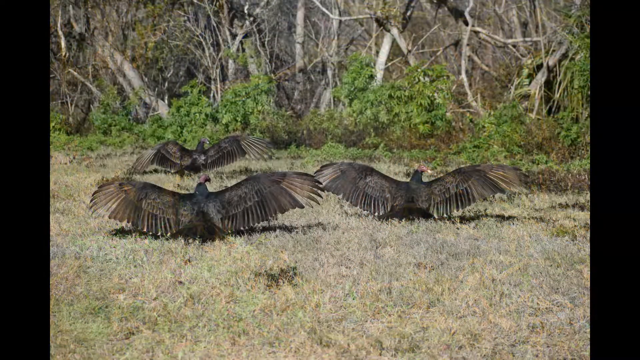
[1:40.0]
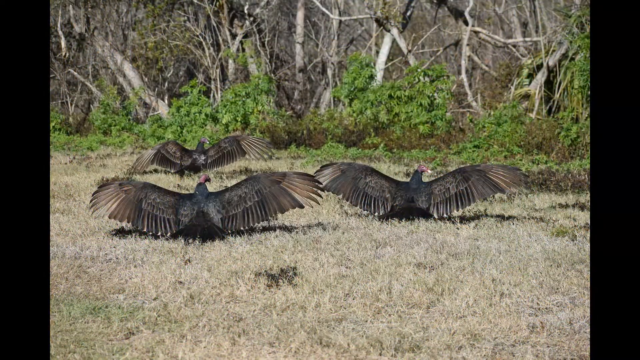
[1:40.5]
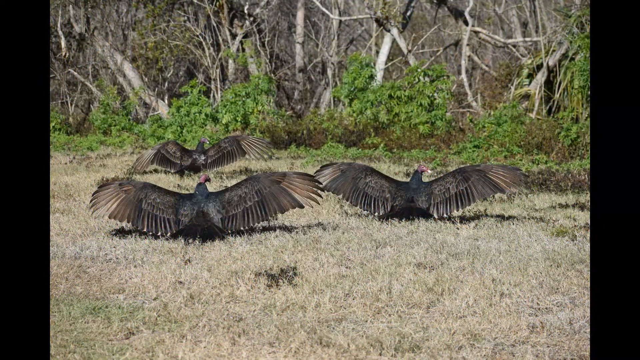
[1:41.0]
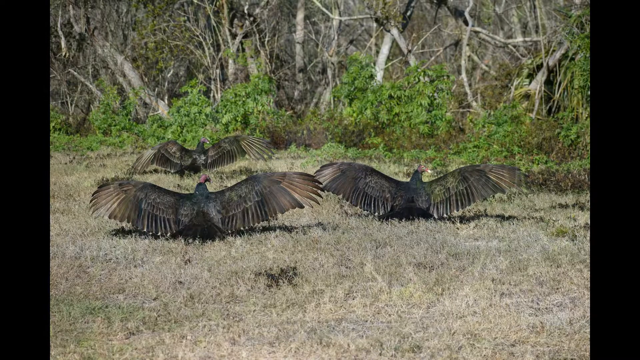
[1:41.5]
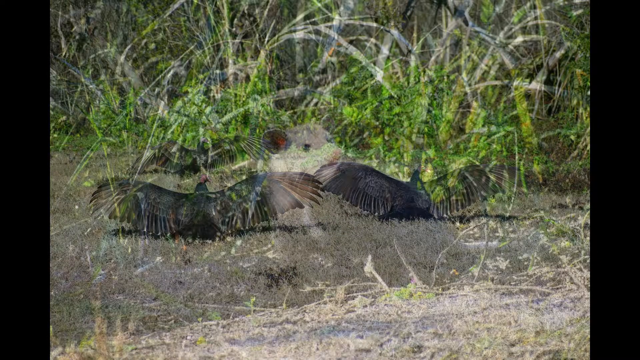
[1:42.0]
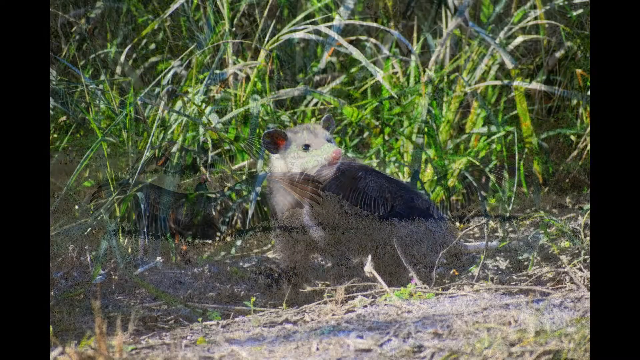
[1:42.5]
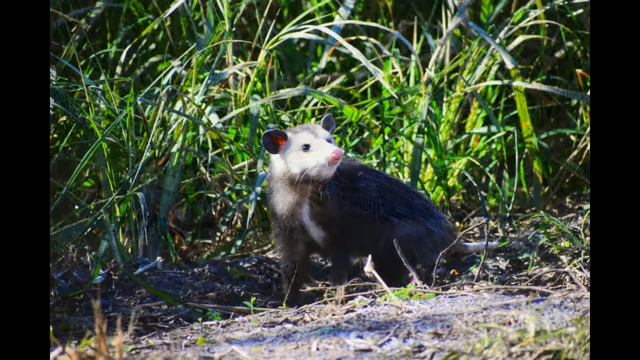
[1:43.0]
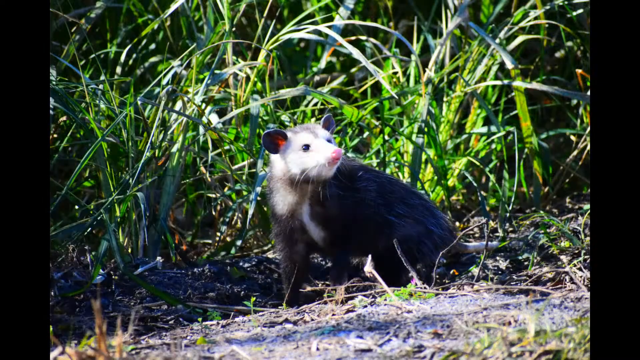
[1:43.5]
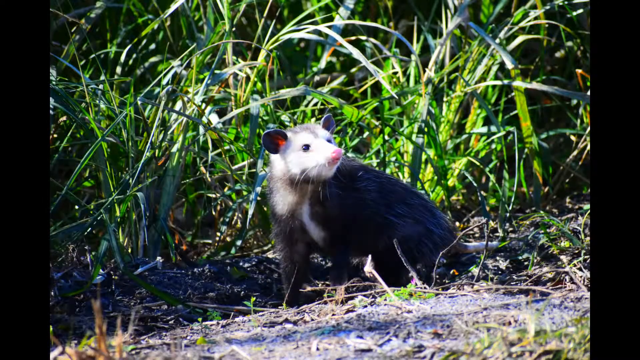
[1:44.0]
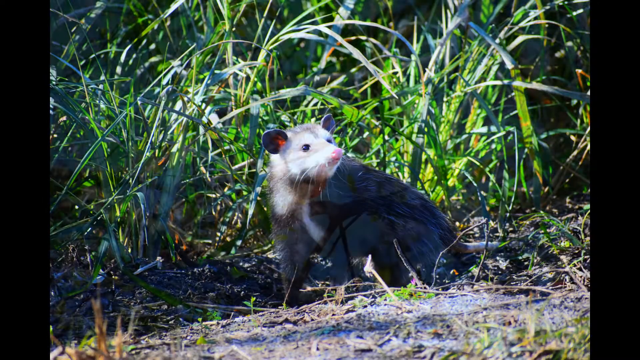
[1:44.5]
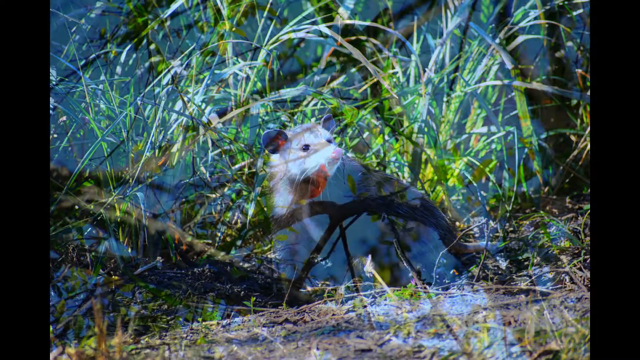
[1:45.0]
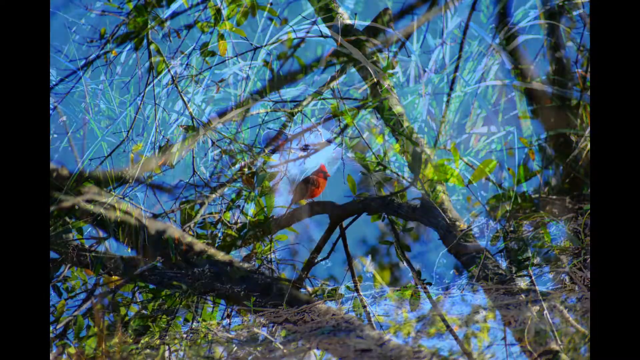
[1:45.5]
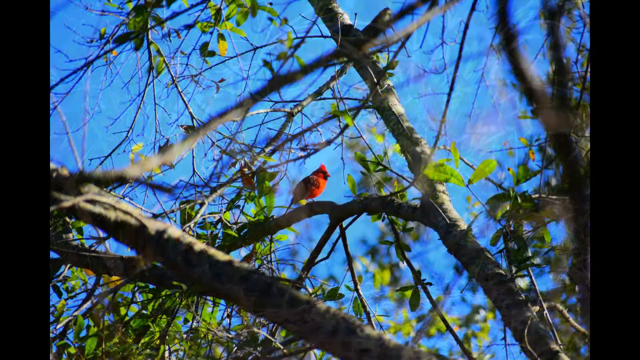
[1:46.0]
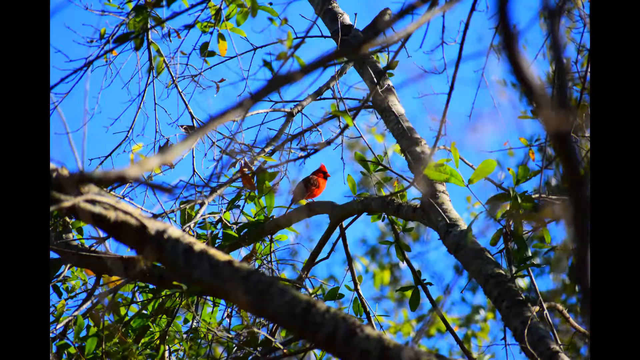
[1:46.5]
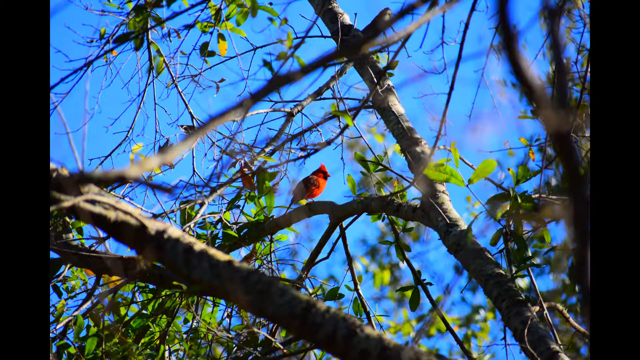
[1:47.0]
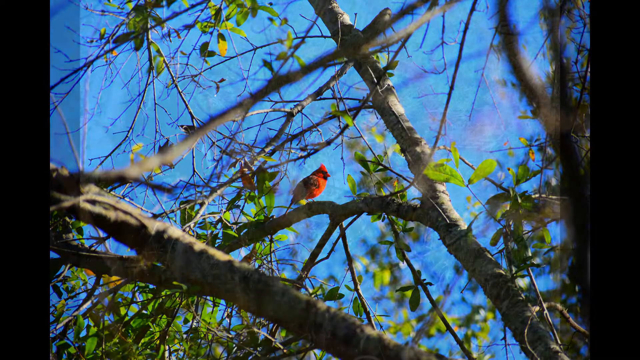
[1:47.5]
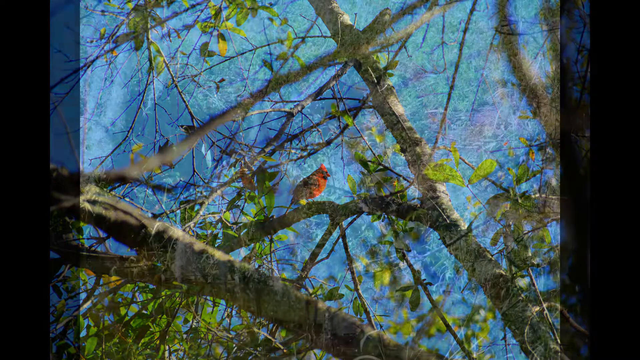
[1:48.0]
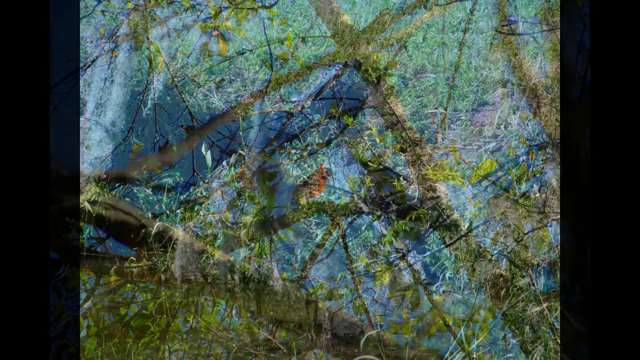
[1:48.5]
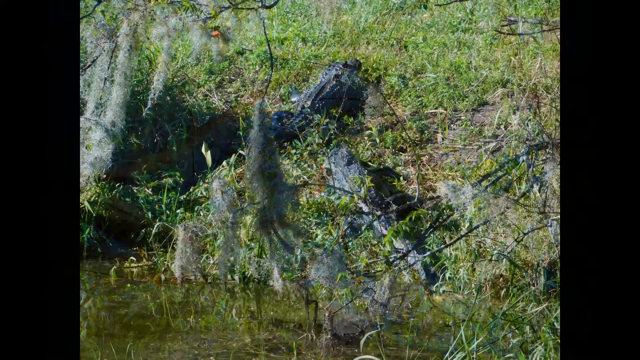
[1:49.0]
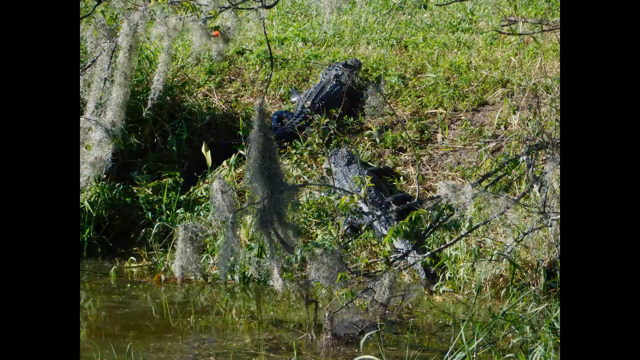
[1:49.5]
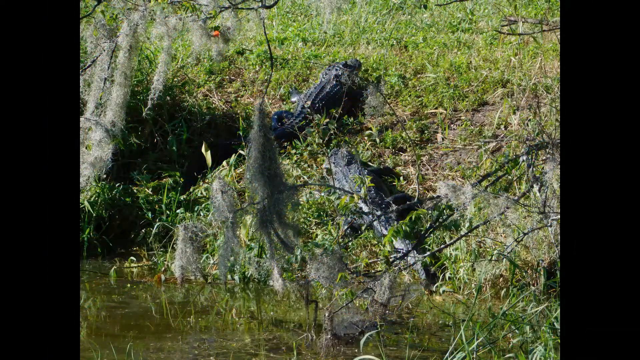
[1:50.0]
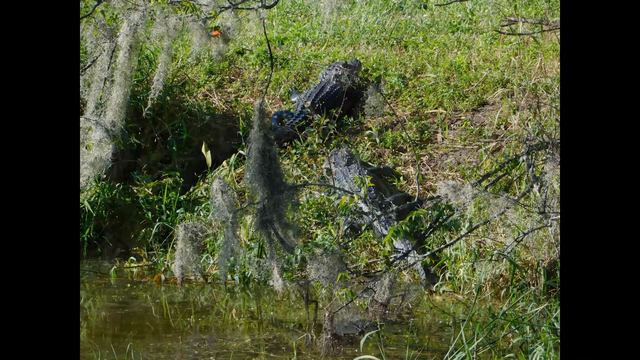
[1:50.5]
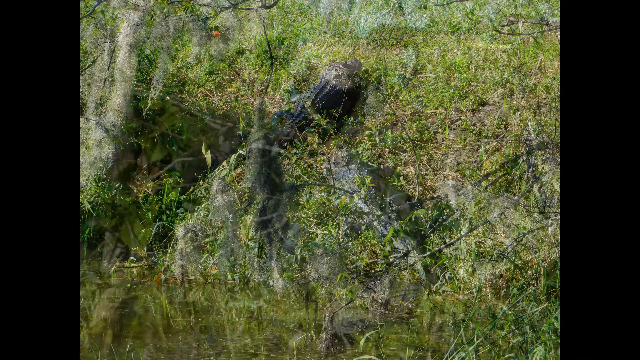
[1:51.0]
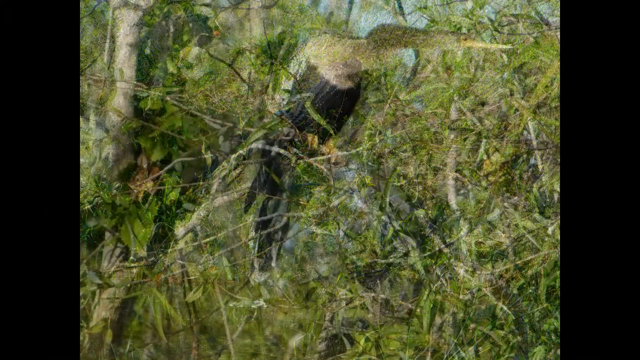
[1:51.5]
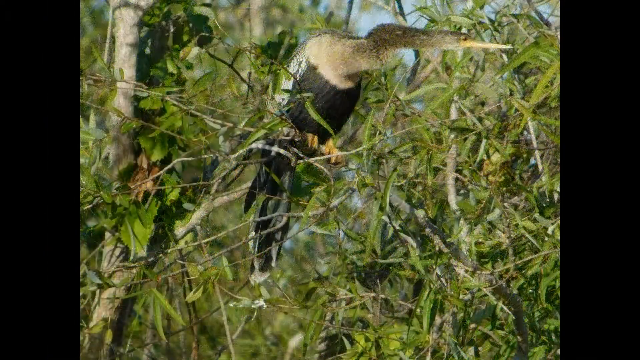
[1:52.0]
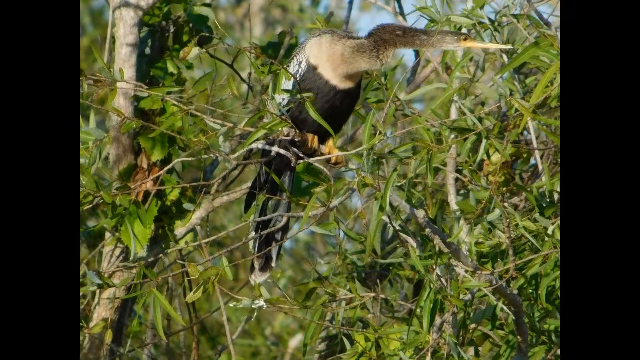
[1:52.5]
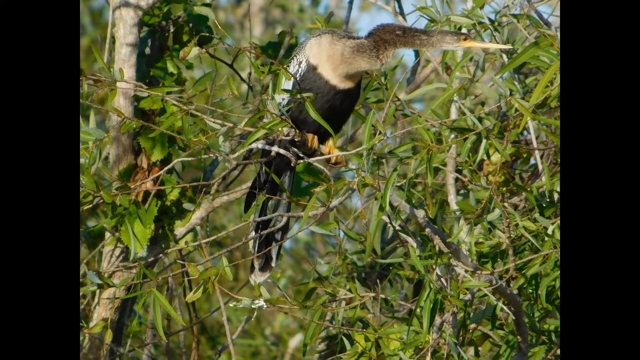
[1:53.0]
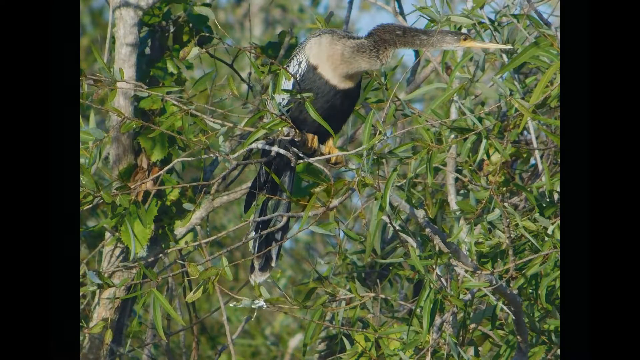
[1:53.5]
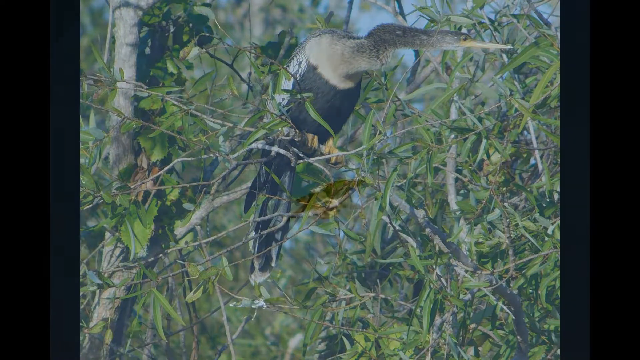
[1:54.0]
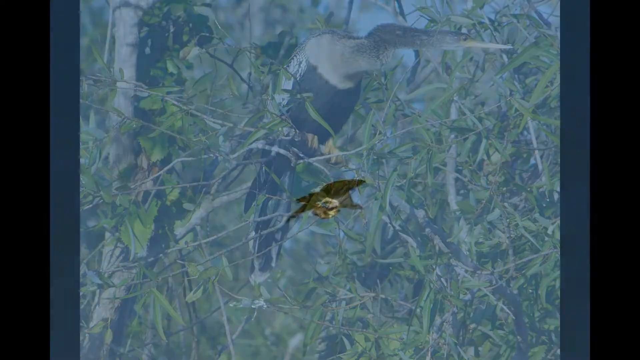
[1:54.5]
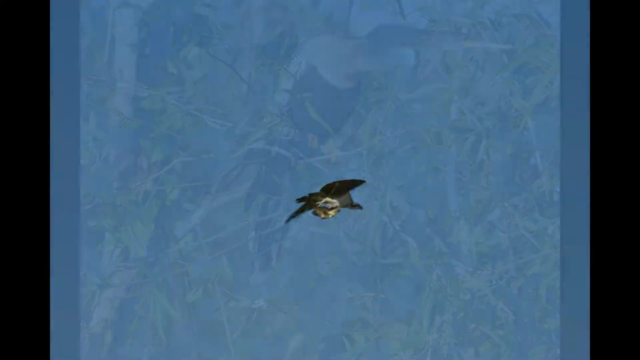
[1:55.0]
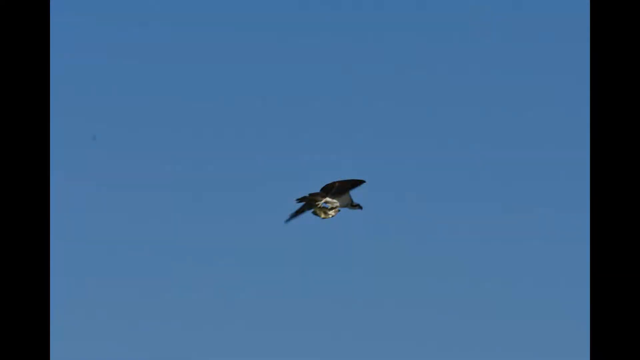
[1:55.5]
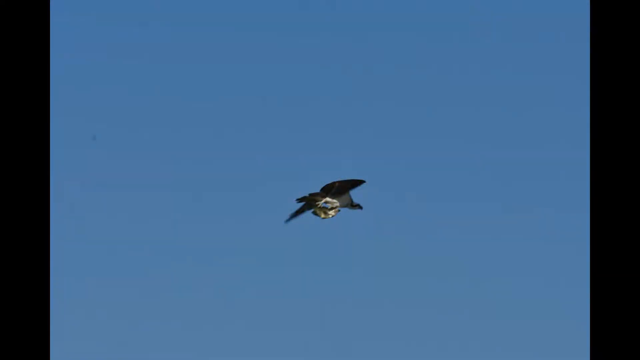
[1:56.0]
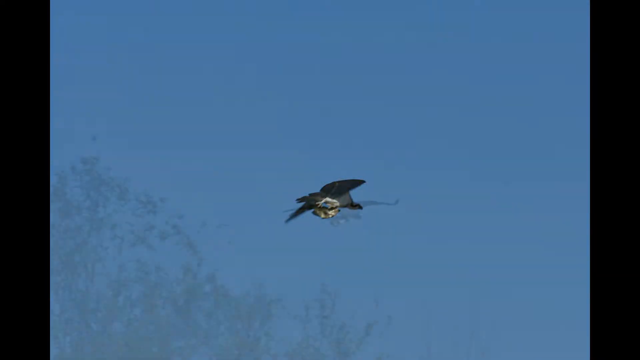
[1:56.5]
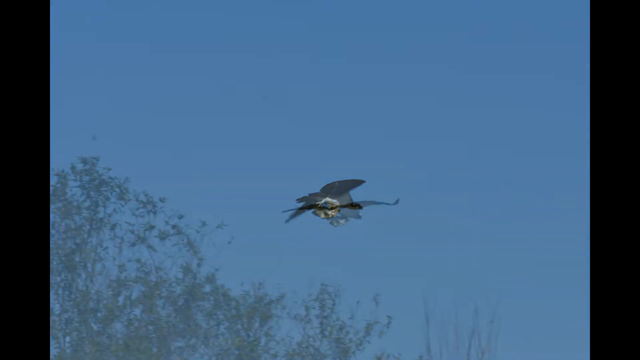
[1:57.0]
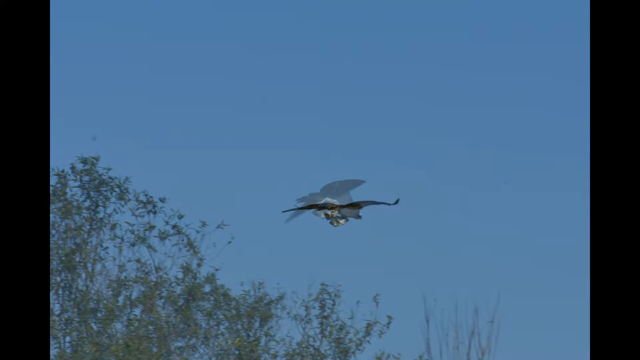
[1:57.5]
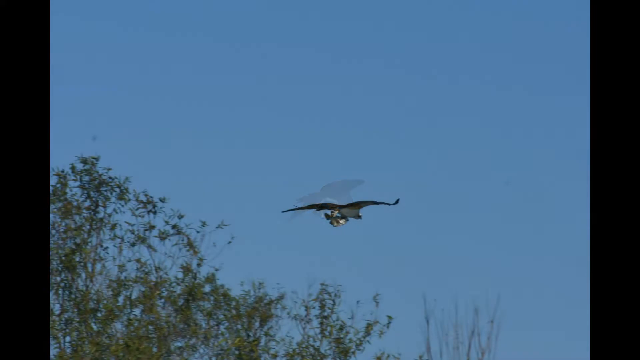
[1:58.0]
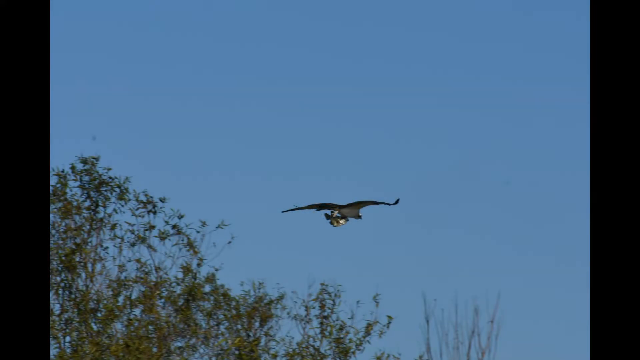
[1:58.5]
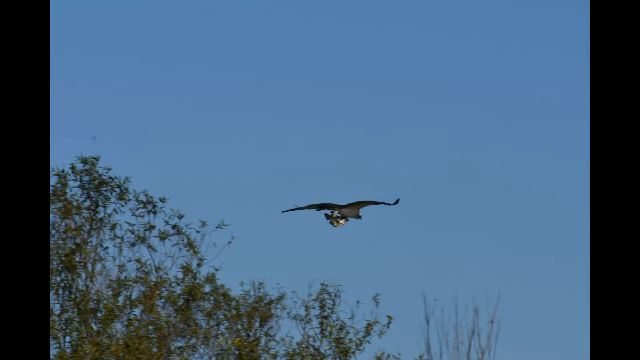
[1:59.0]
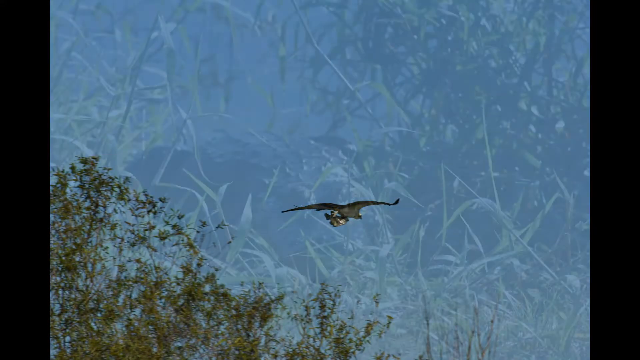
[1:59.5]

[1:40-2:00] Three large turkey vultures with brown feathers and red heads have their wings outstretched, just about to land in a field; they are standing in the field with green bushes in the background. Next is a muskrat of some sort with a pink nose, a white face and beady black eyes. A red jay with a colorful red crown and red body is perched on a branch against a bright blue sky. Two crocodiles or alligators exit the water and slowly crawl up a grassy hillside. A bird with a light brown neck, black feathers and orange feet is perched in trees. A bird flies mid-air against a bright blue sky, followed by a slightly different version of the bird flying through the sky, and then the slideshow is back to the turkey vultures in the field.